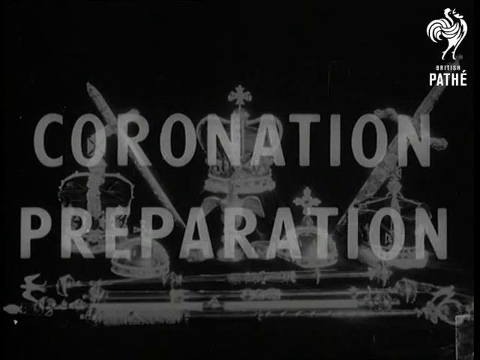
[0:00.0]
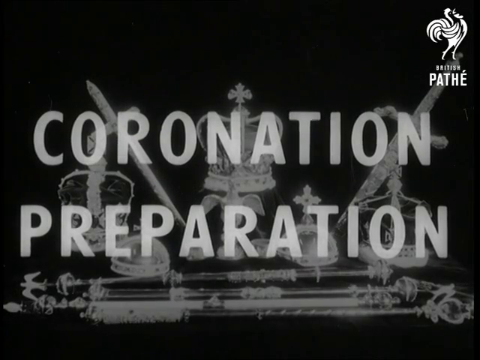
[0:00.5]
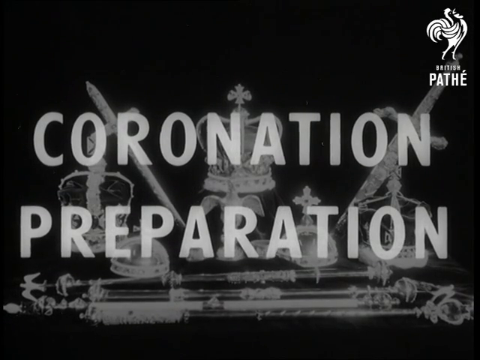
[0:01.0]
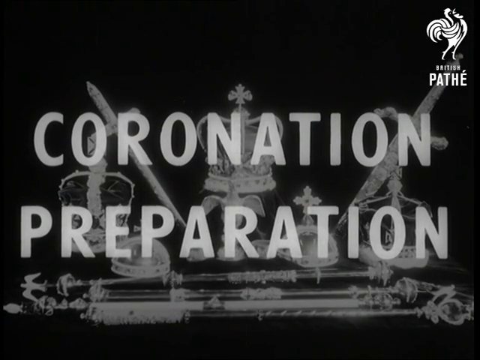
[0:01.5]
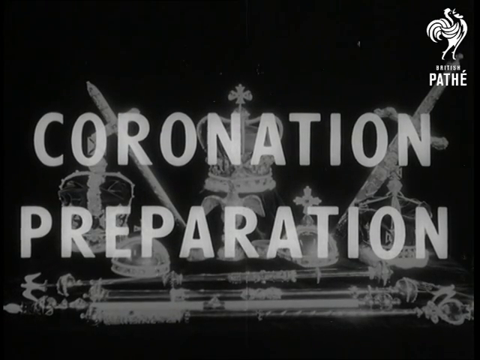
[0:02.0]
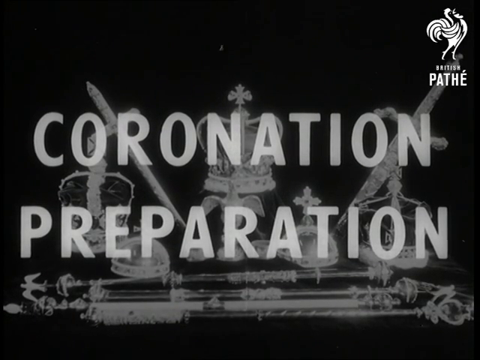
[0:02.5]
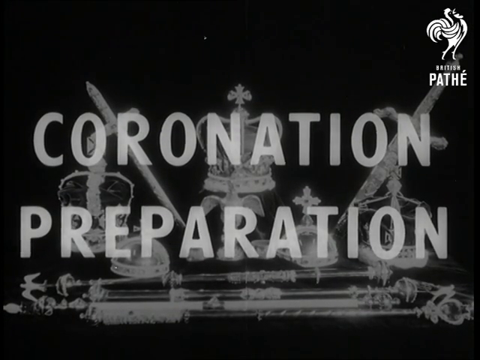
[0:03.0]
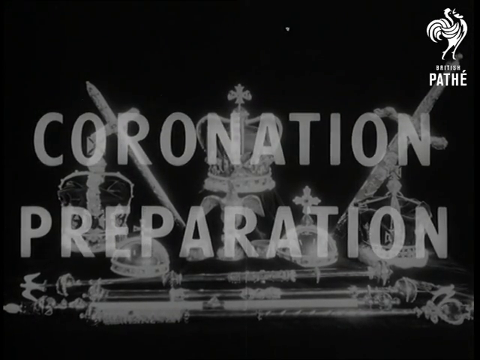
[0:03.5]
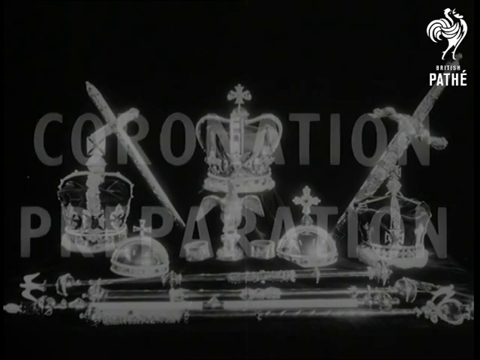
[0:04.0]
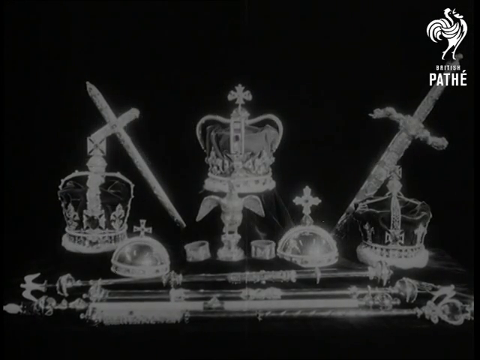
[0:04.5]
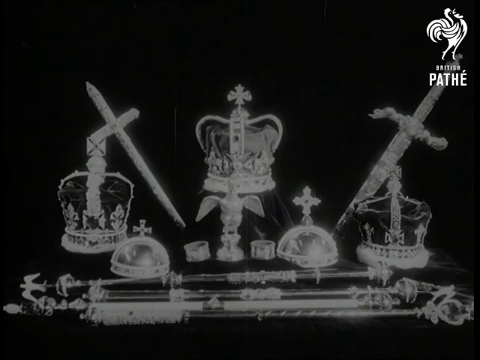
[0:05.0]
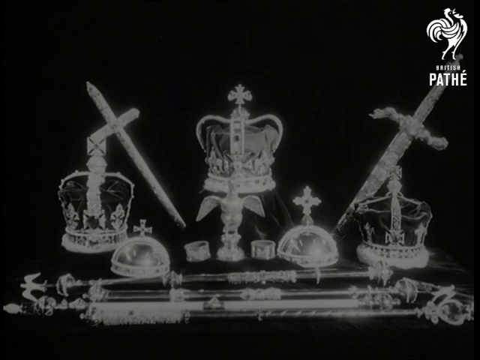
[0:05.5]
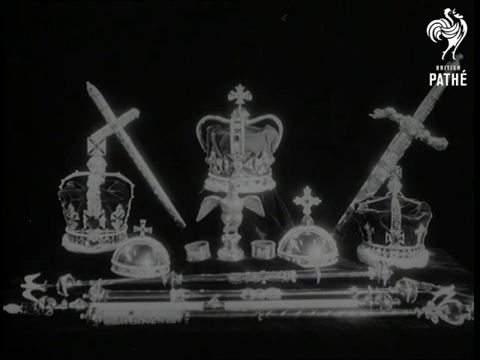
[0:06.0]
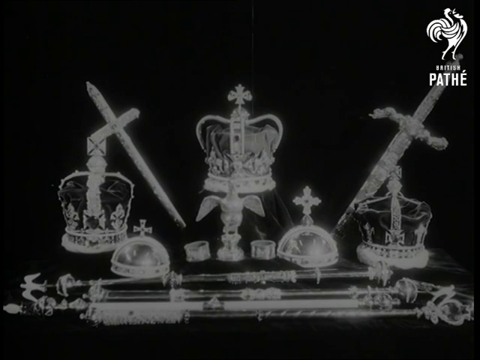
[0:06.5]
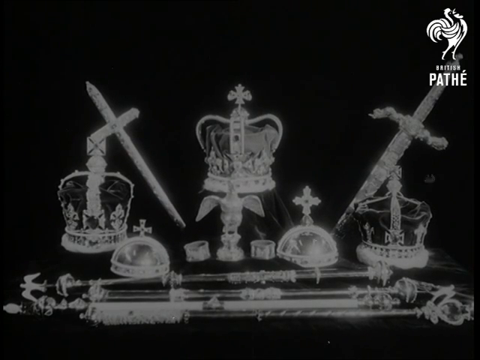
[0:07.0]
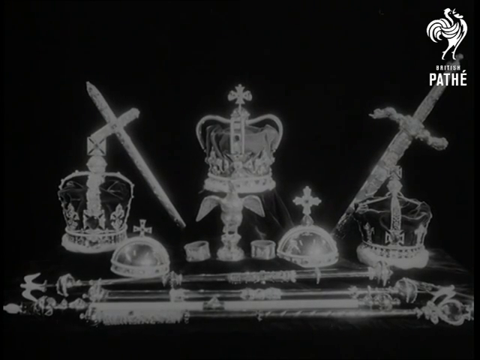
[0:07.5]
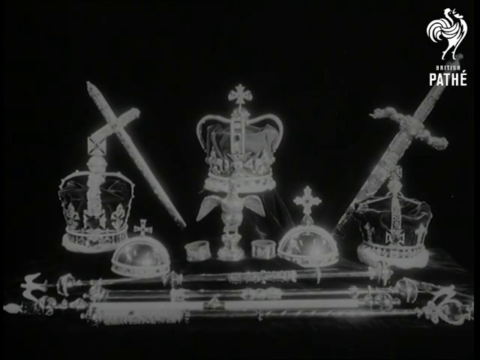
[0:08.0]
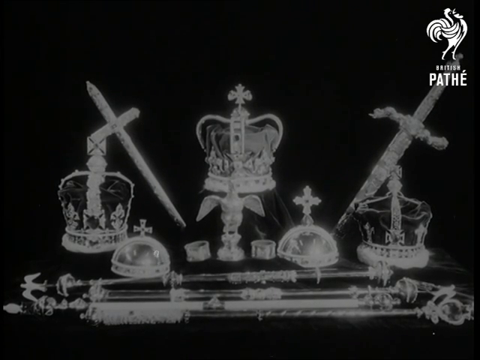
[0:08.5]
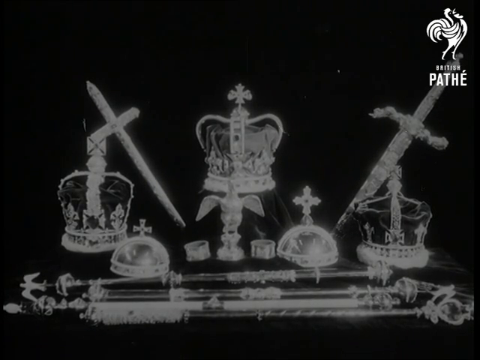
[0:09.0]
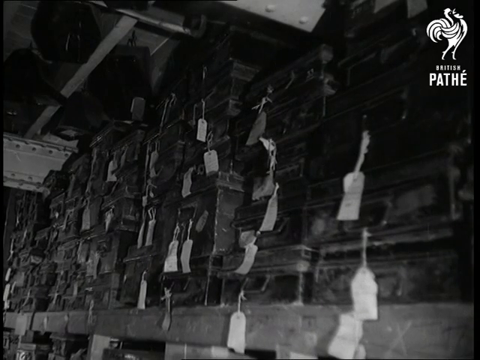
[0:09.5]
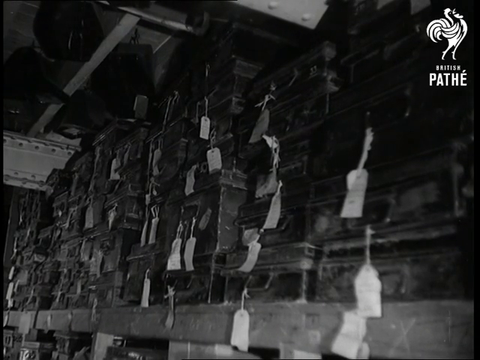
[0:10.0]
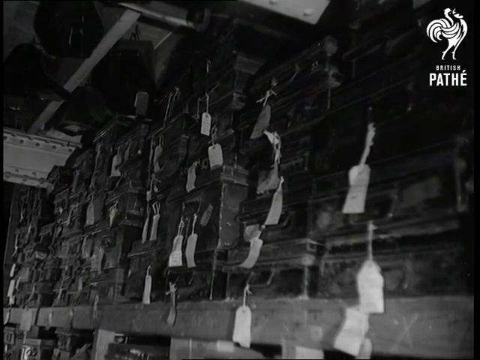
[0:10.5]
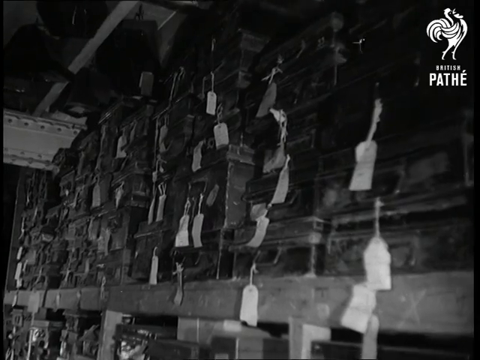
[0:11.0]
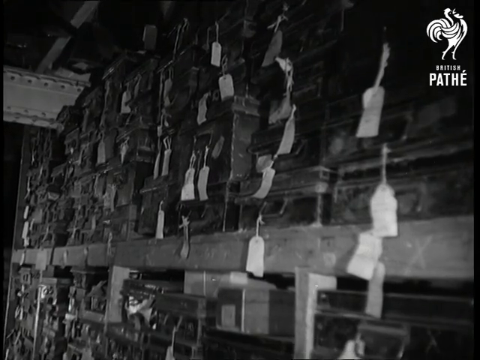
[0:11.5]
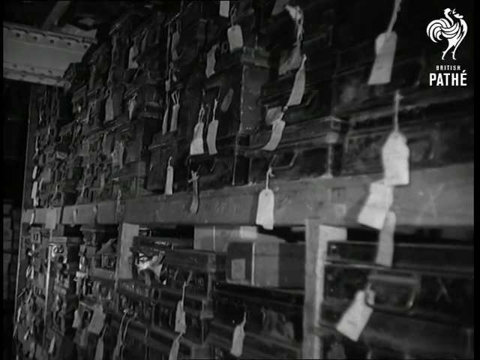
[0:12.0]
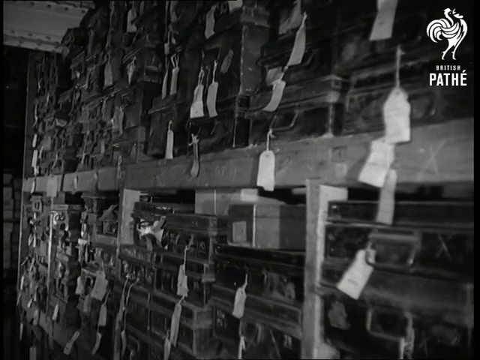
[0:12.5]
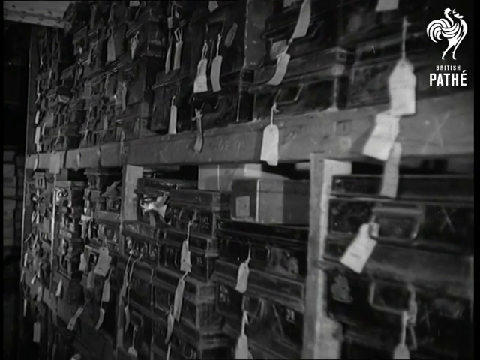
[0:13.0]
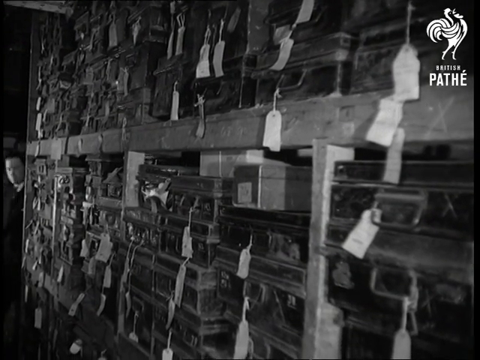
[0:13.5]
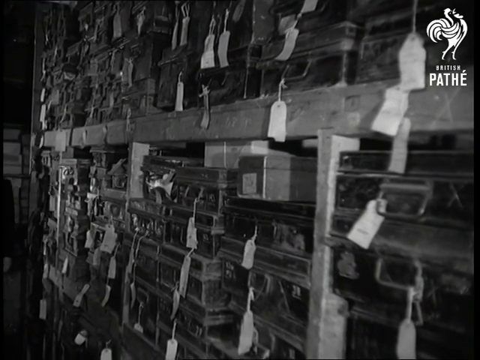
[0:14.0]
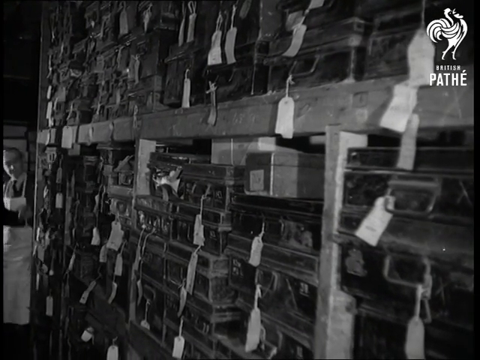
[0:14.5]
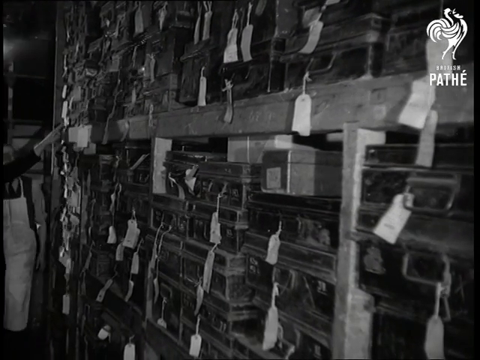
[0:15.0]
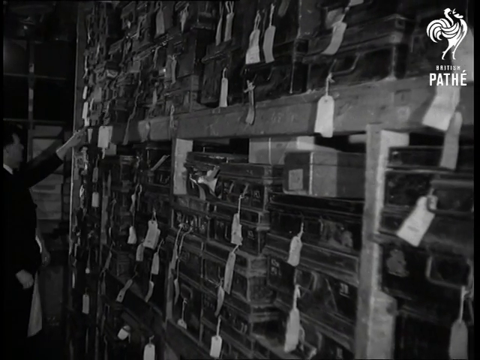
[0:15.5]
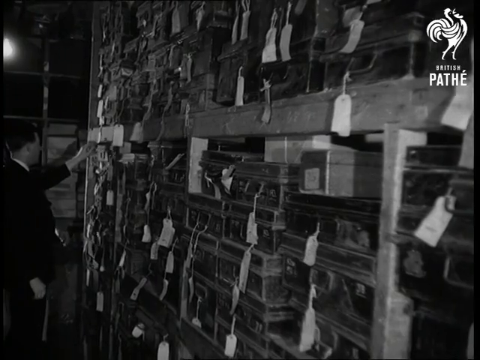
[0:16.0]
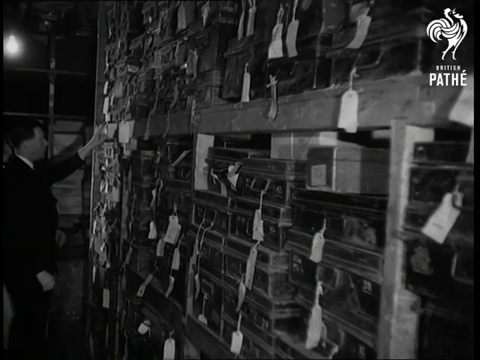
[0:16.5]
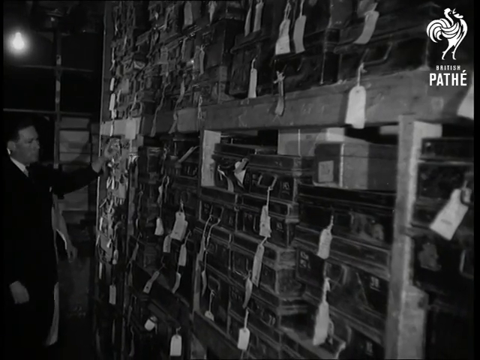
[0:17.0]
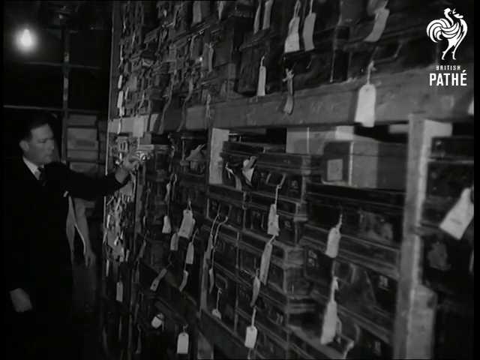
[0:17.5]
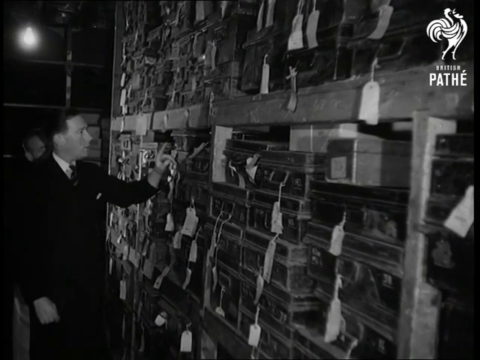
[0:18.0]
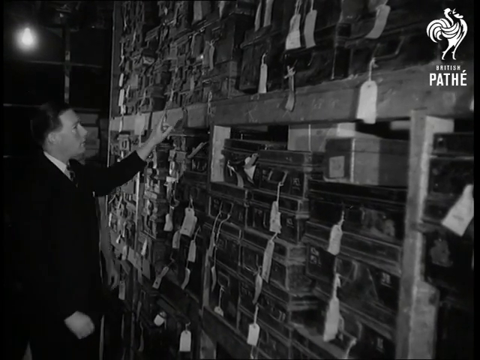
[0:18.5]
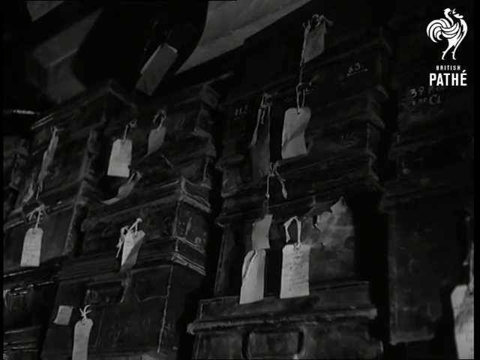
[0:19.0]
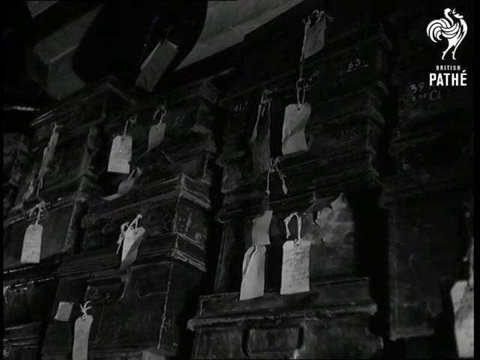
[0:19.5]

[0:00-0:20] In black and white footage, the text "coronation presentation" appears, and in the top right the text reads "British Pathe" (spelled P-A-T-H-E) with some sort of logo. Multiple crowns and two swords are shown, along with maybe some other kind of regal tools or weapons and a couple of crosses; because everything is in black and white, it all looks silver. The scene then moves to a wall stacked with things stored in a wooden storage unit, each with tags on them. Two gentlemen walk along, one wearing an apron and one wearing a suit, pointing at and referencing the cases or storage unit. A light bulb is visible in the top left.